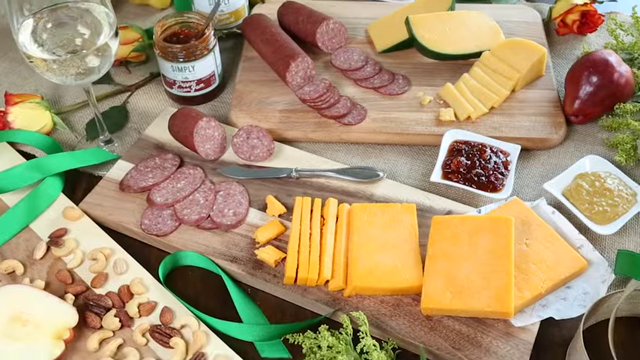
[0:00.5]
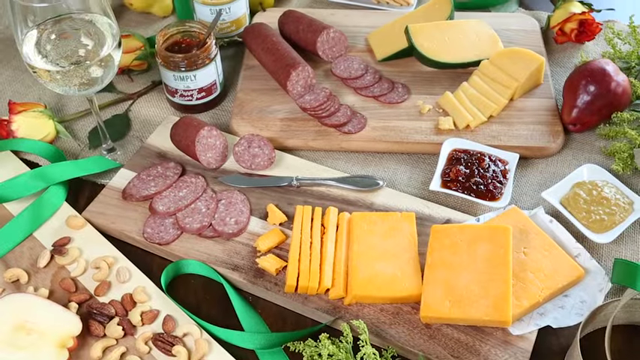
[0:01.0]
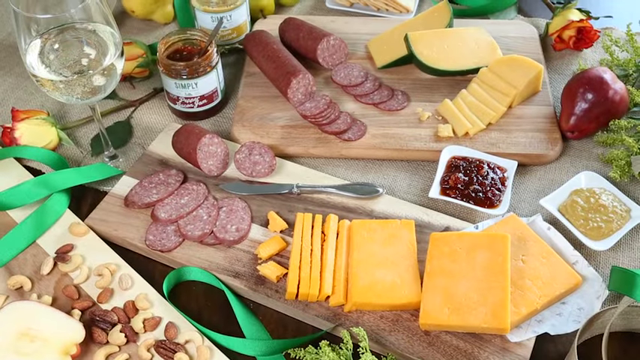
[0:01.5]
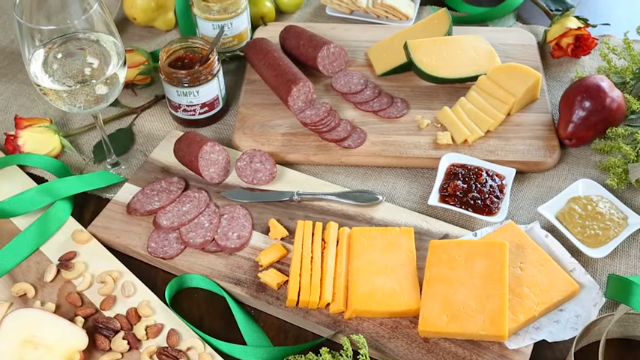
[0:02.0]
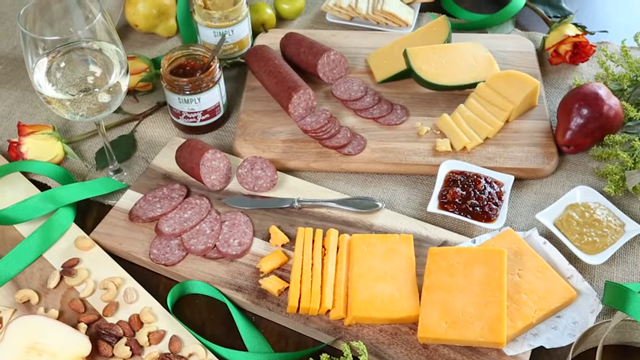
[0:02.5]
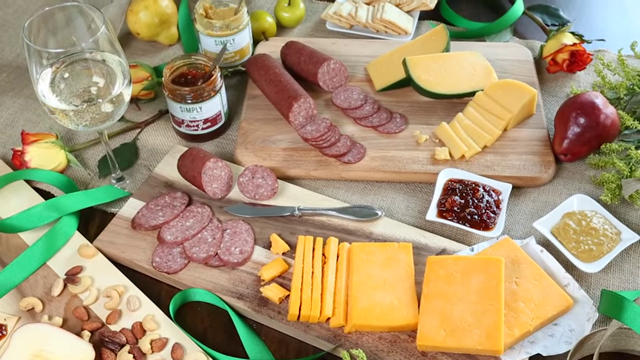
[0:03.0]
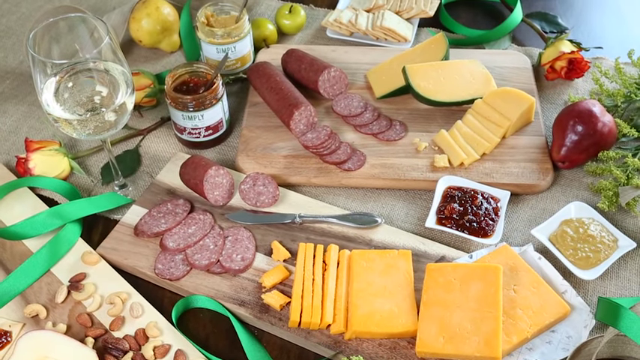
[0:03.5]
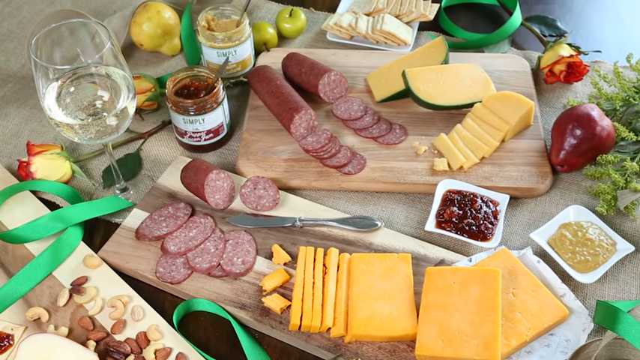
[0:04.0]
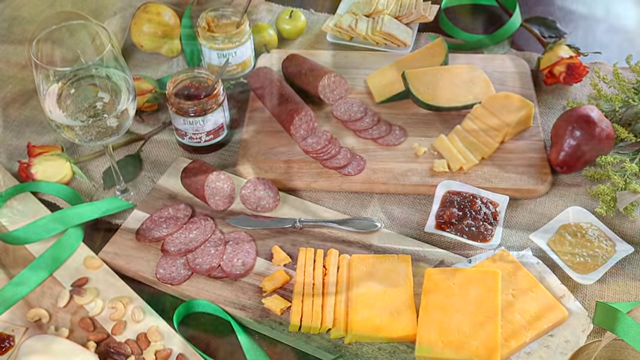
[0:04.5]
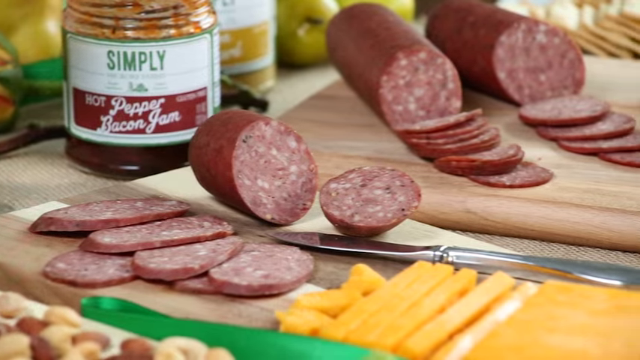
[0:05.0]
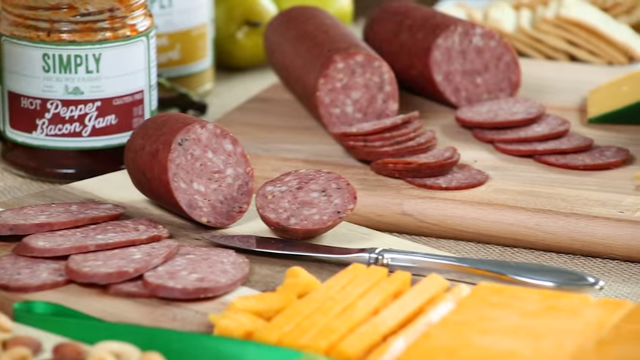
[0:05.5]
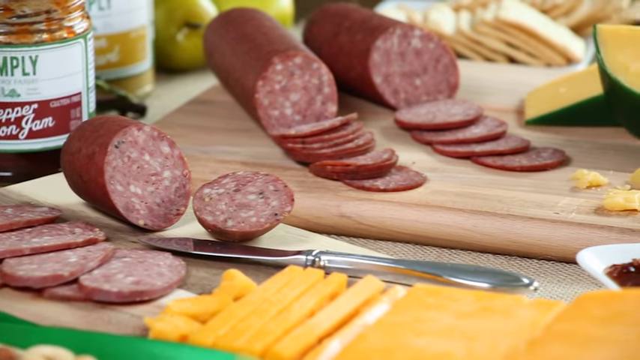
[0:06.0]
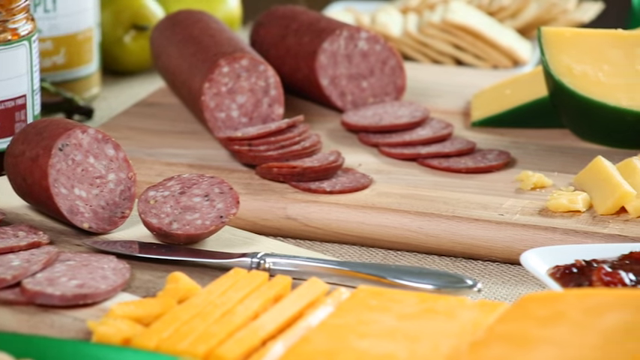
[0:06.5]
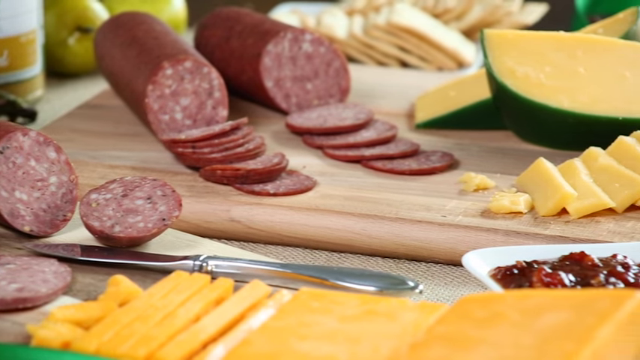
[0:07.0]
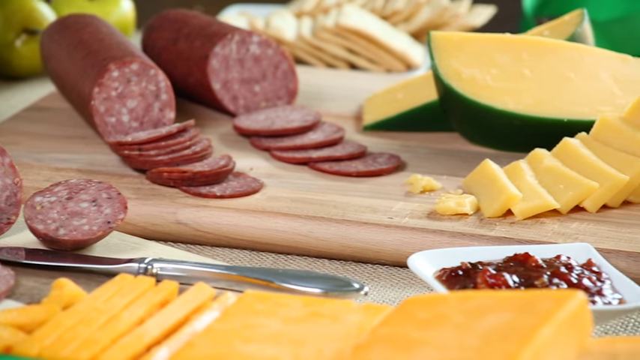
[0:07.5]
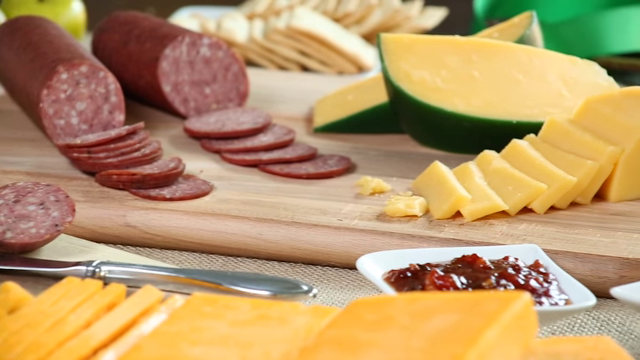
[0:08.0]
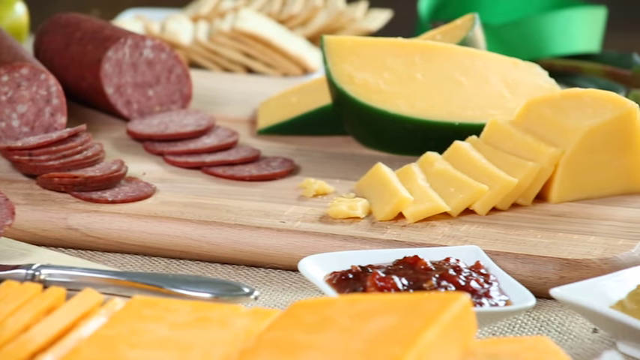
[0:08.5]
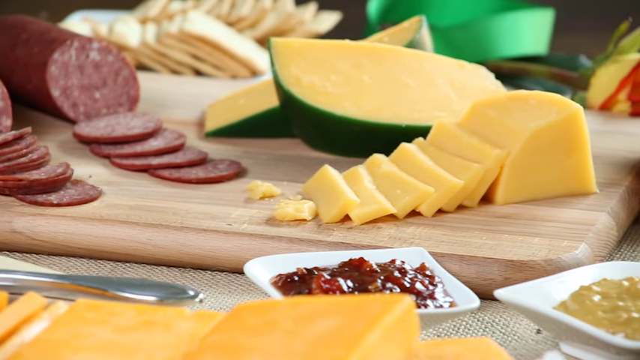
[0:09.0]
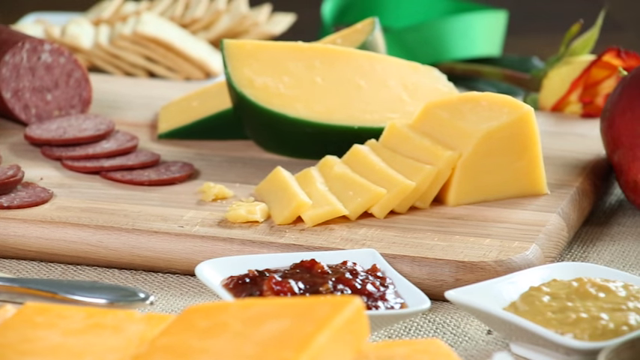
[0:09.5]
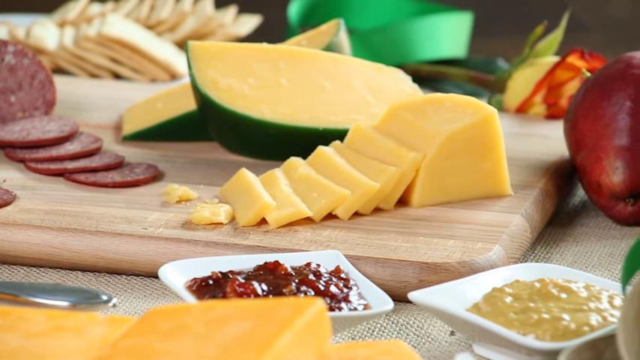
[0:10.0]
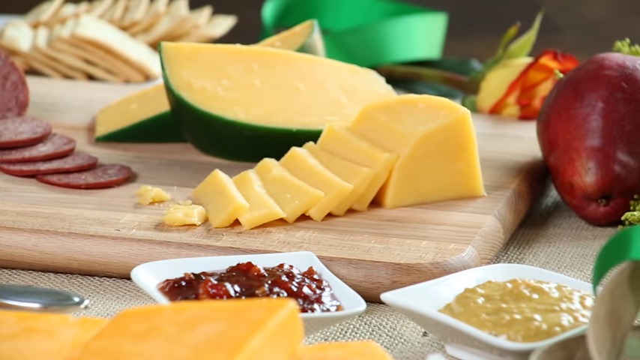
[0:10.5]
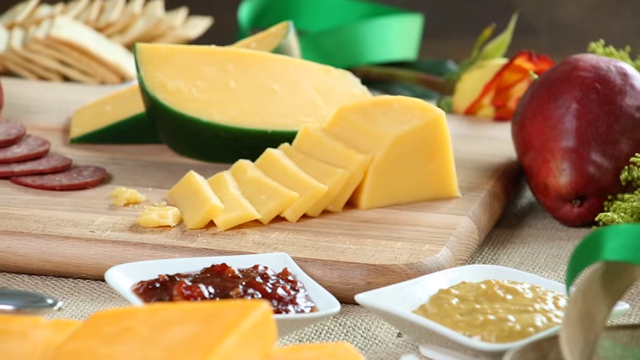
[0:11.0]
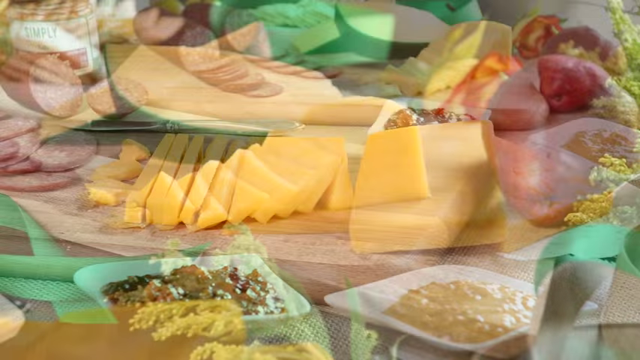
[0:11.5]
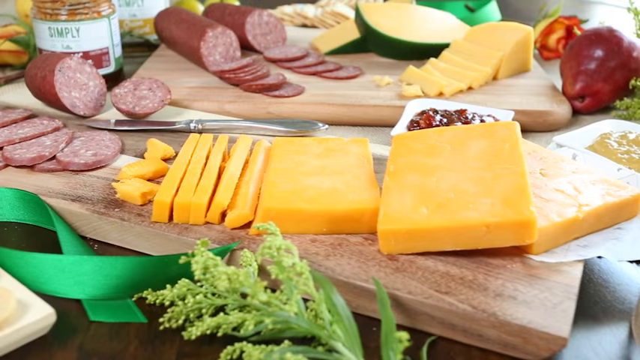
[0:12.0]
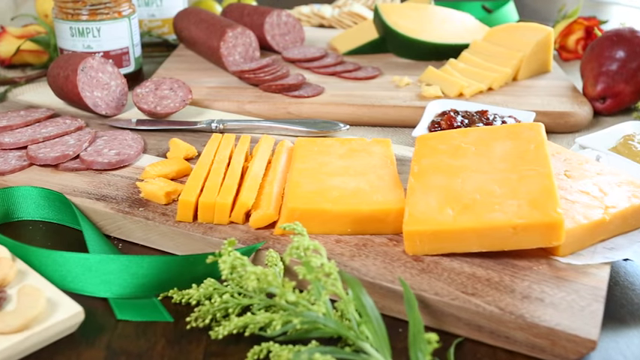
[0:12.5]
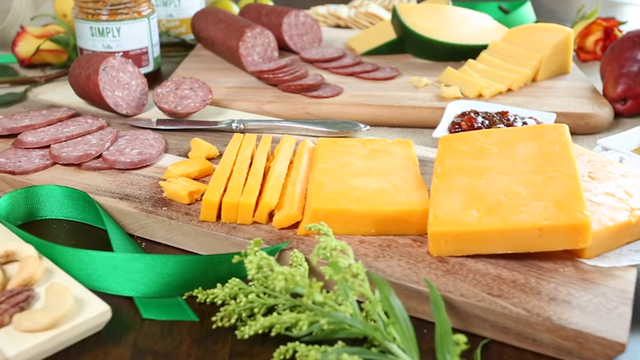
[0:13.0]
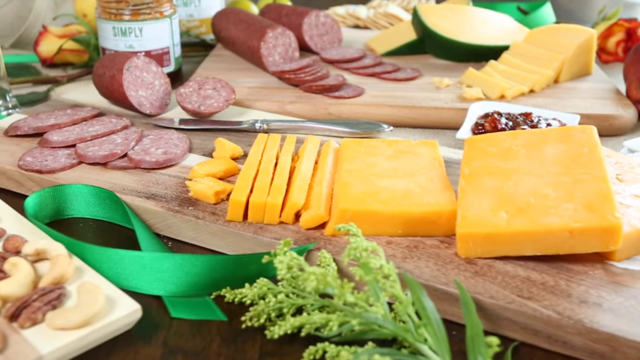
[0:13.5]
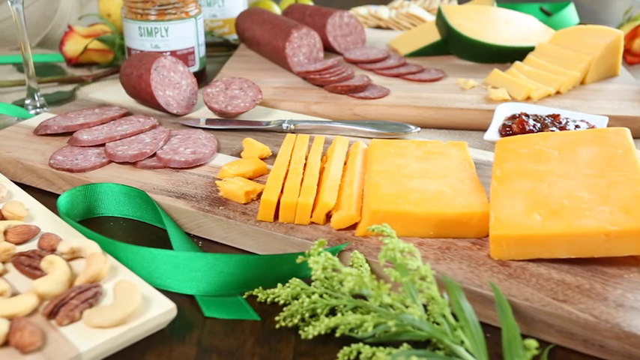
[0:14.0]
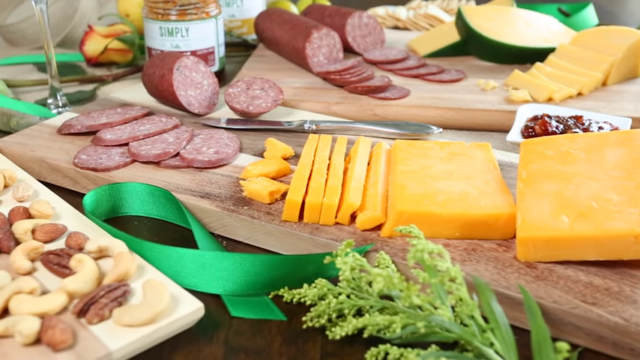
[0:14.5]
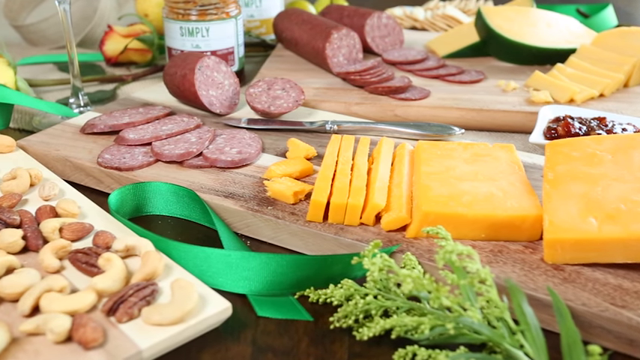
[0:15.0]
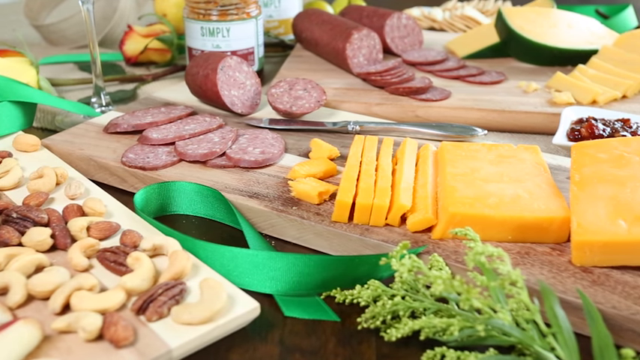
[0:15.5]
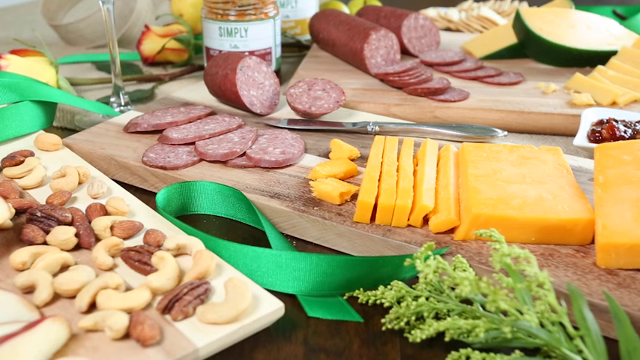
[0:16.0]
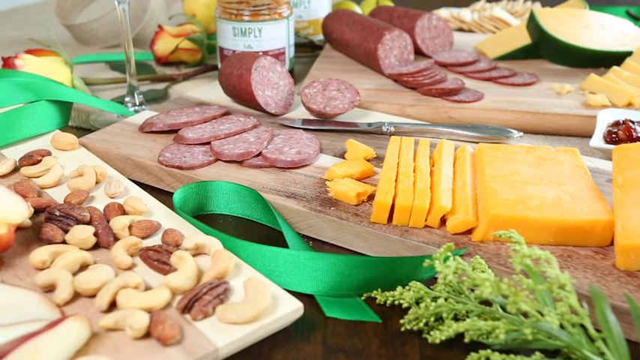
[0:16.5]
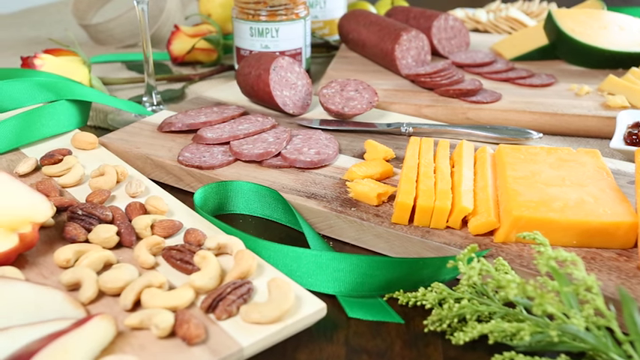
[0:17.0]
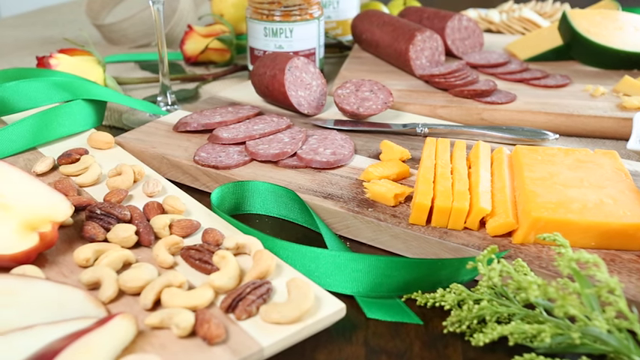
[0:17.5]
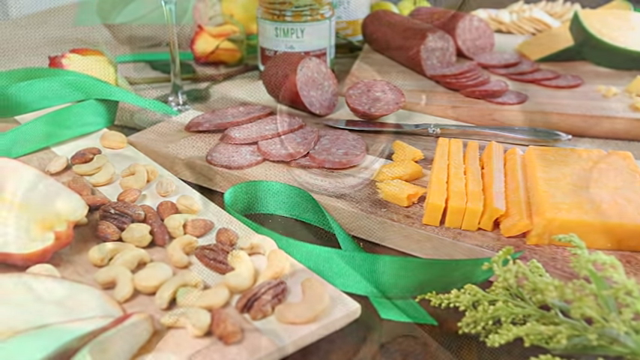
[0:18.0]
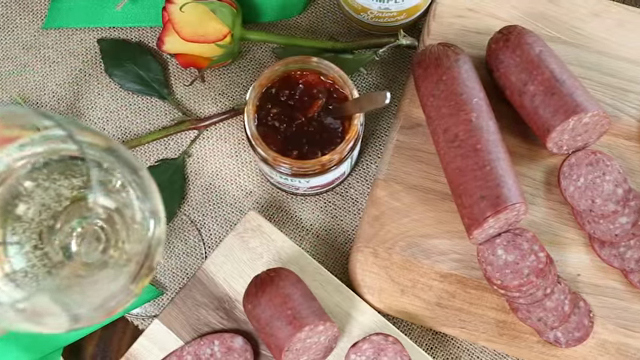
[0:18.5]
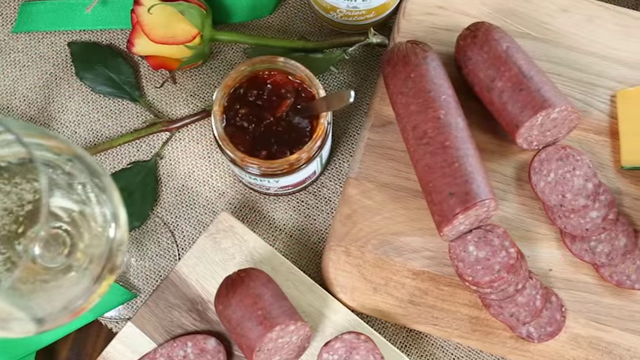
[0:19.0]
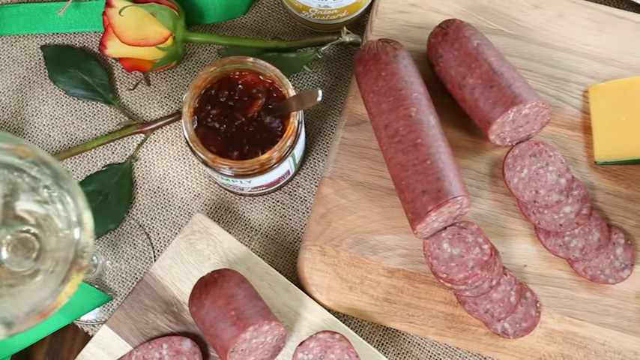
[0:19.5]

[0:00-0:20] What looks like a large spread of salami, cheese and different nuts is kind of set out on a table, along with some open jars of jelly and different kinds of jam. The salami and the cheese are on top of cutting boards, and a plate of cheese is in the background. It looks like a charcuterie plate is being set up. The camera pans from left to right over salami chopped up on the cutting board and cheese chopped up as well, with the jams in the foreground and an apple. It then pans from right to left, showing more cut-up cheese, the nuts in the foreground, the salami in the background and a jar of the jam in the background. An overhead shot then moves from left to right over the charcuterie-type spread.